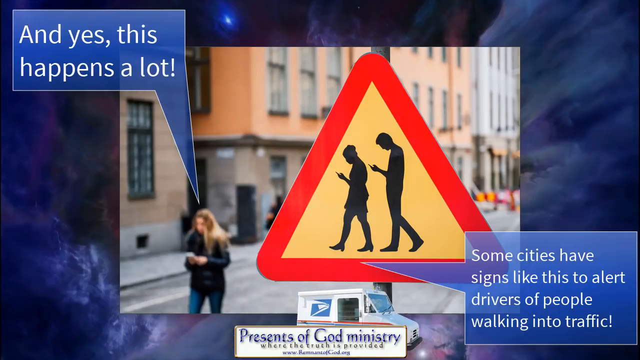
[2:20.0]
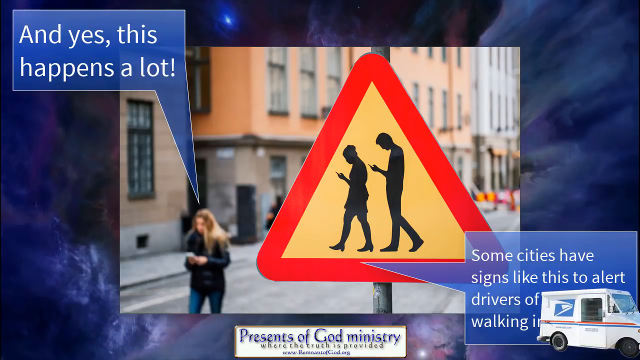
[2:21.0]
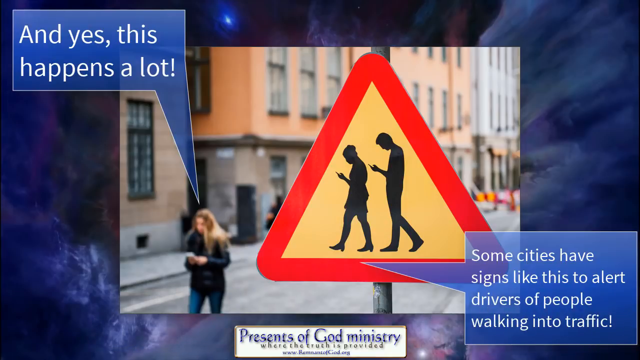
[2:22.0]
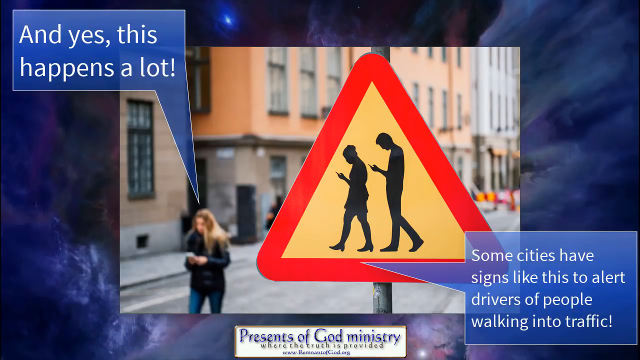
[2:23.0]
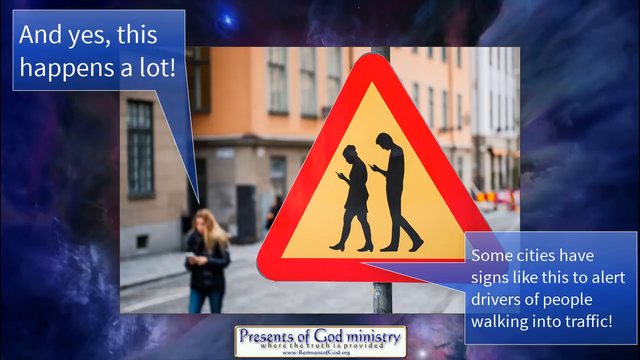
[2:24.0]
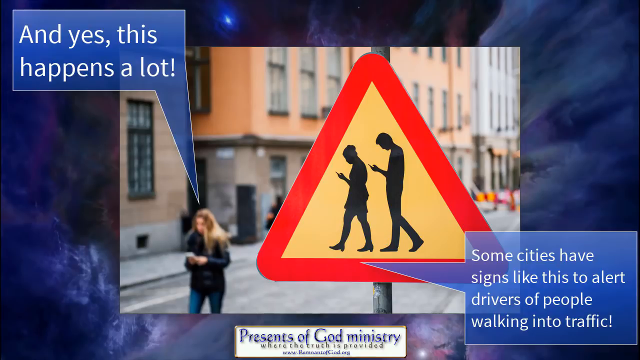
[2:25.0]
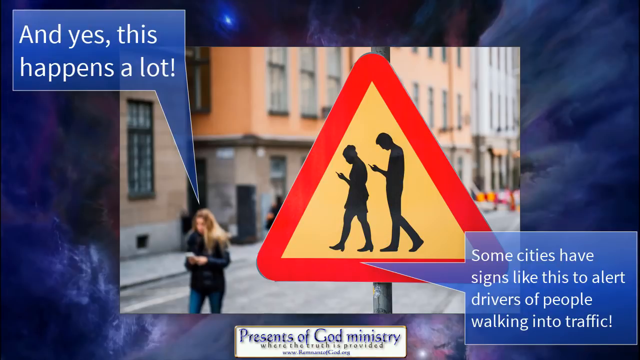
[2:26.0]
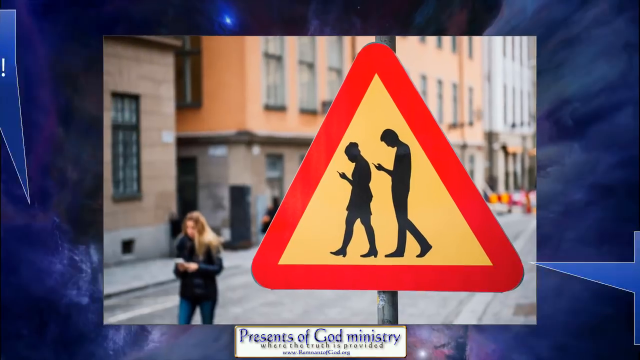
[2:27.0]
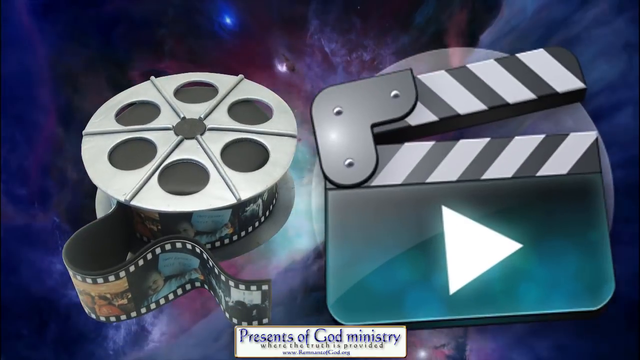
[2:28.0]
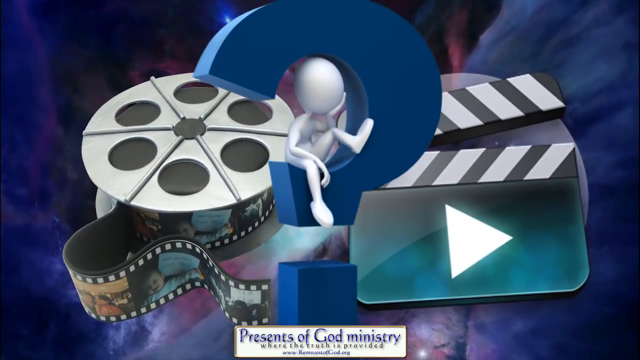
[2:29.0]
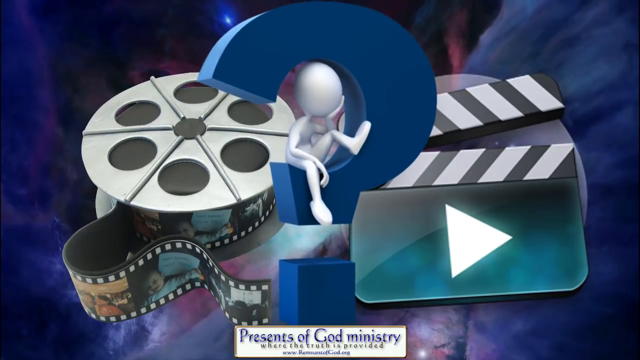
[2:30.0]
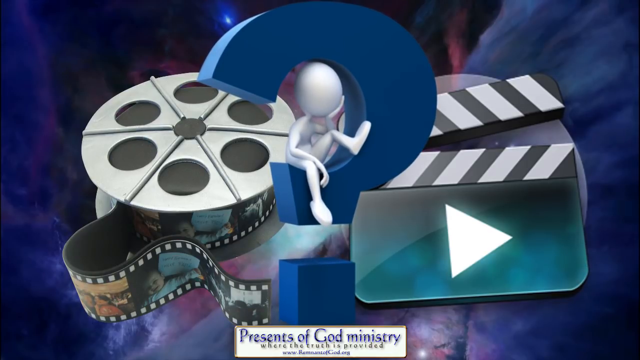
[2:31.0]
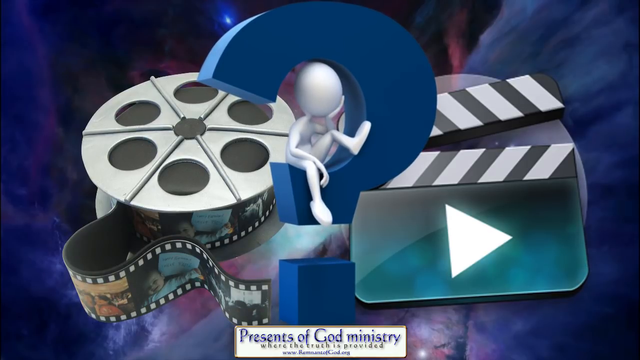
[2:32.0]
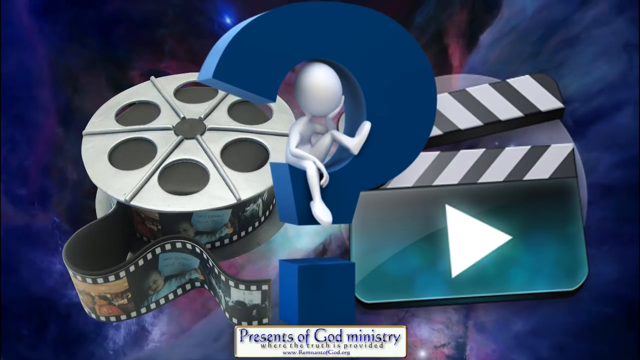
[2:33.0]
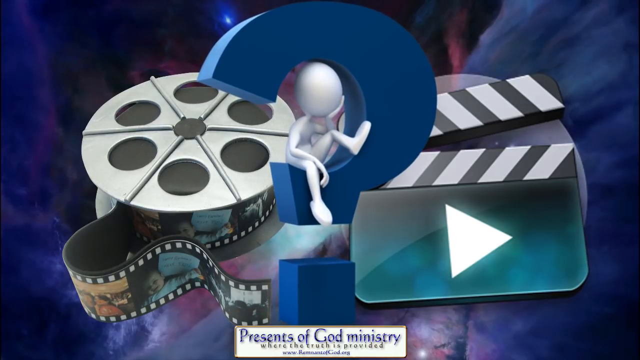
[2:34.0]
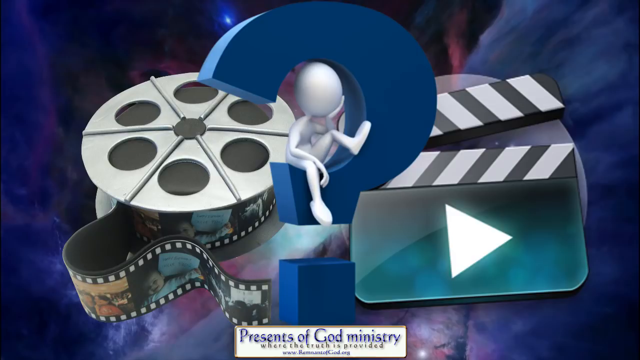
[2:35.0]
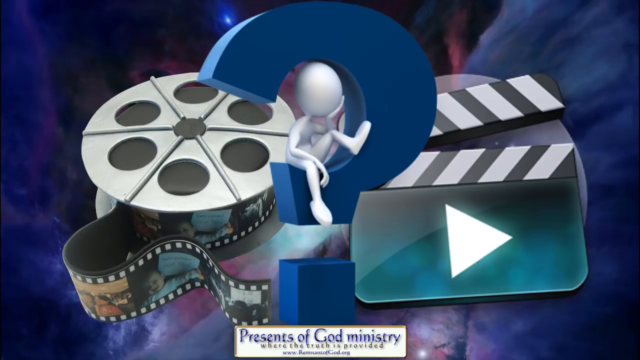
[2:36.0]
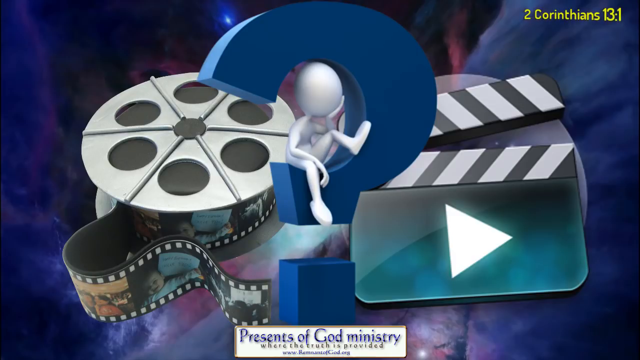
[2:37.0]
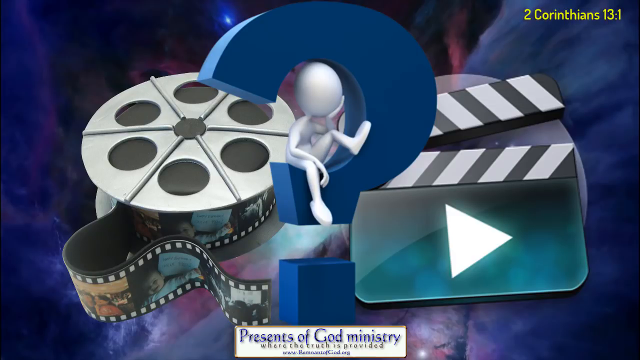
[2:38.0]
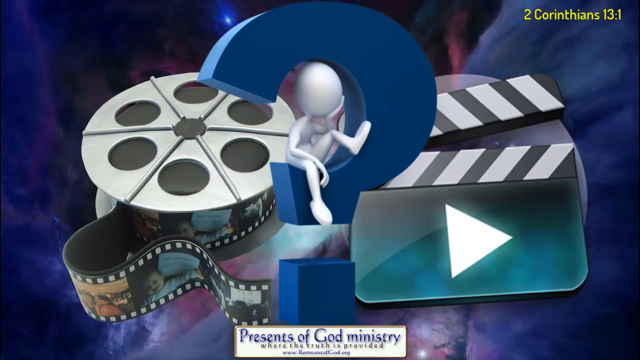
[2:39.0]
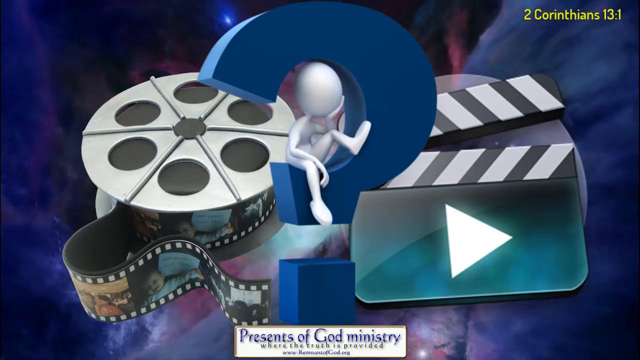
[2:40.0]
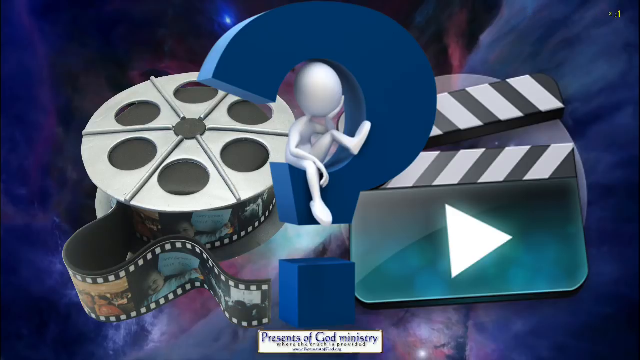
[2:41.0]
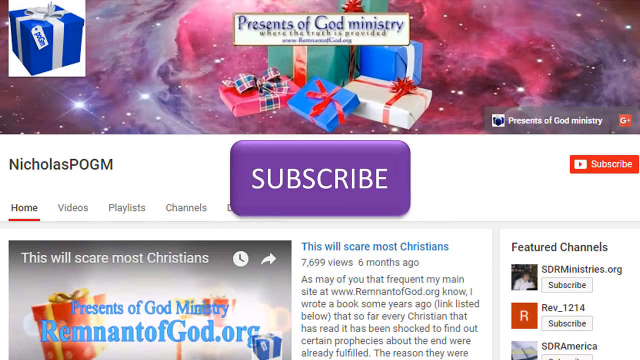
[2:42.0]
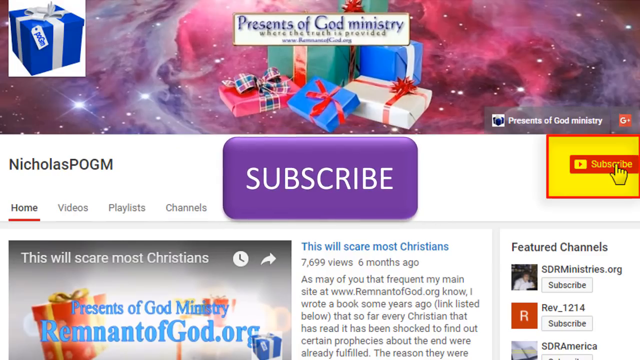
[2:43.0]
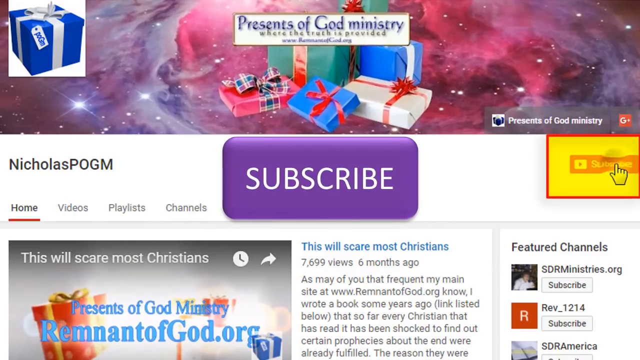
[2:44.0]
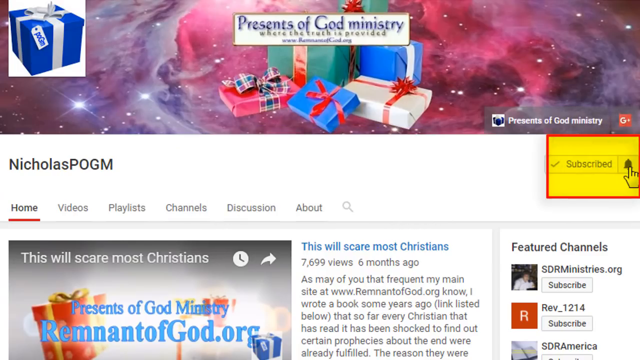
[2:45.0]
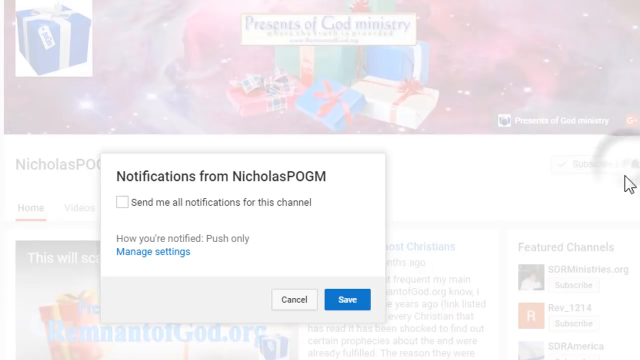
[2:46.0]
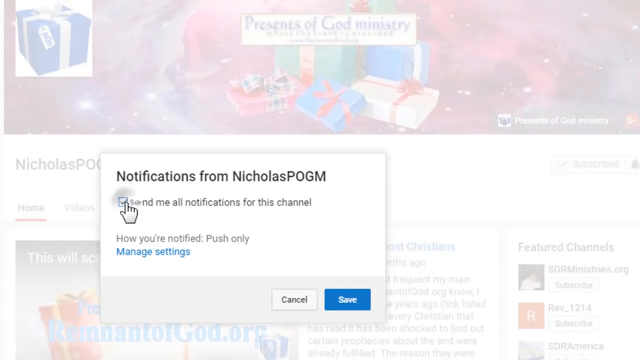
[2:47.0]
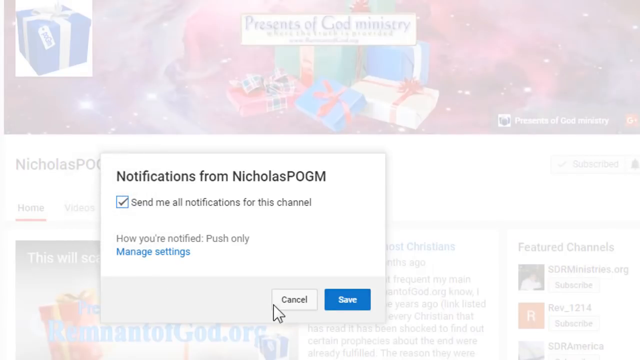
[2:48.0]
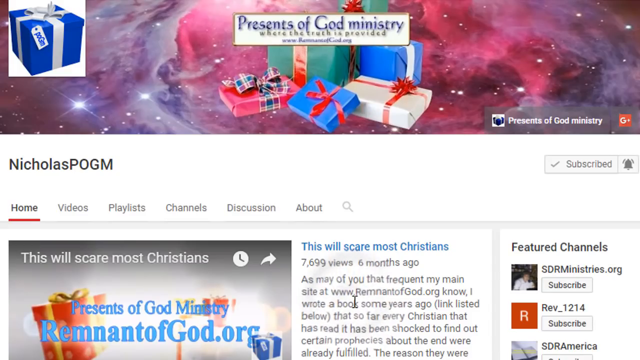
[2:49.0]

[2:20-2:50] The postal truck keeps moving from left to right out of view. Within about three to four seconds, all the items that were on screen leave the view, from left to right and top to bottom, and for a split second only the space background is visible. Then a movie reel appears on the left, and on the right the little clipboard used in movies when they say action. In the middle, popping out from the bottom as the focal point between the two, is a huge blue question mark with a little white cartoon character almost sitting in the middle of it. He has one hand or arm leaning on his right knee, and his other arm leans on something with his palm against his face, as if thinking about something. This stays for a few seconds. Then yellow text appears in the upper right corner: "2 Corinthians 13:1".